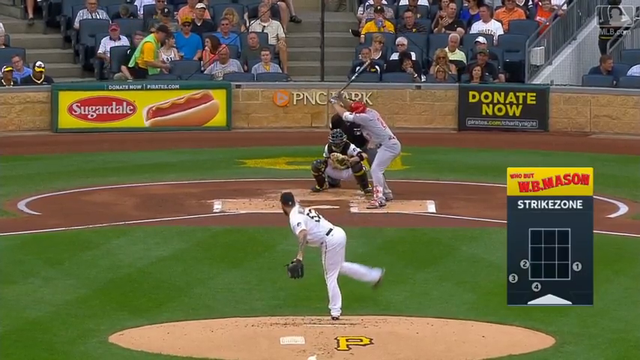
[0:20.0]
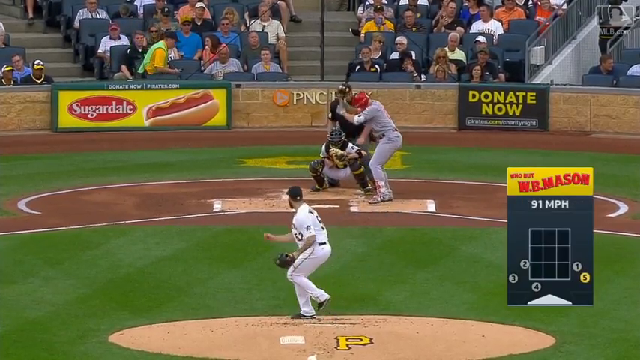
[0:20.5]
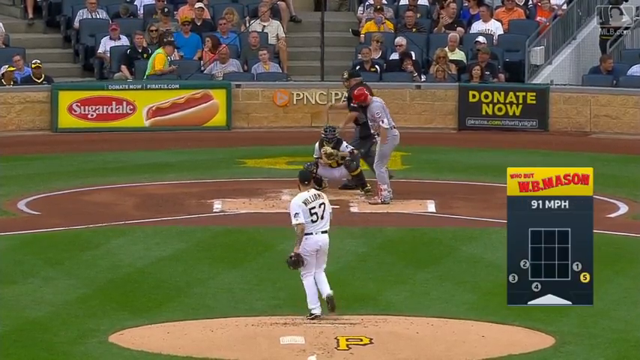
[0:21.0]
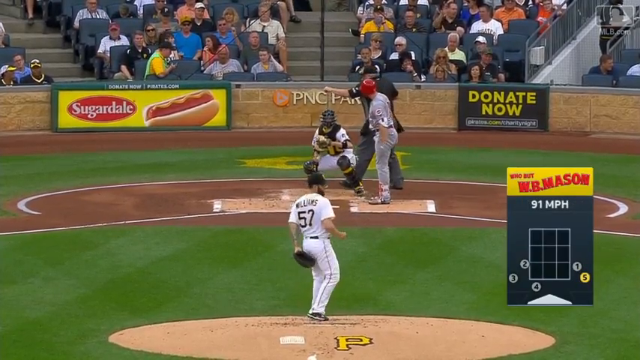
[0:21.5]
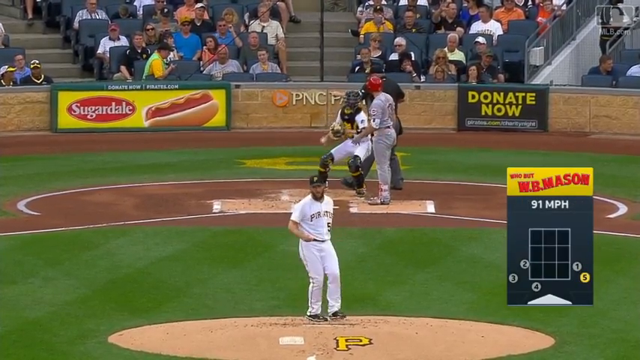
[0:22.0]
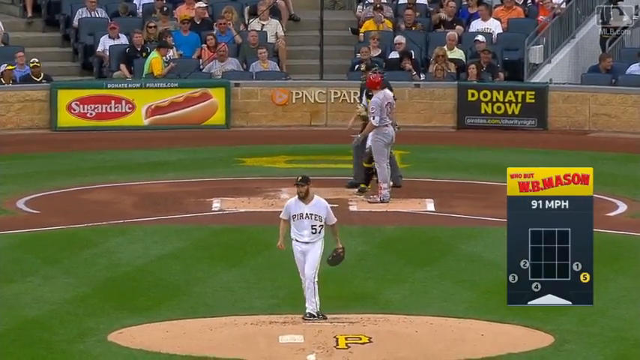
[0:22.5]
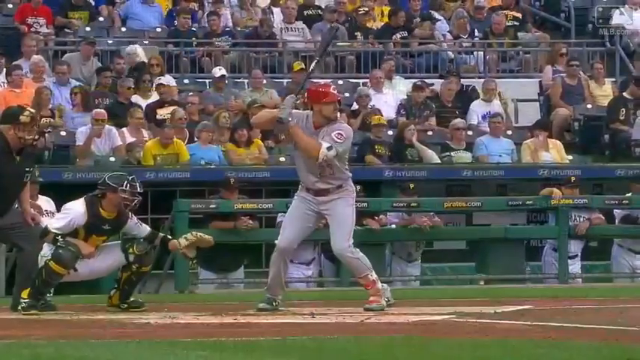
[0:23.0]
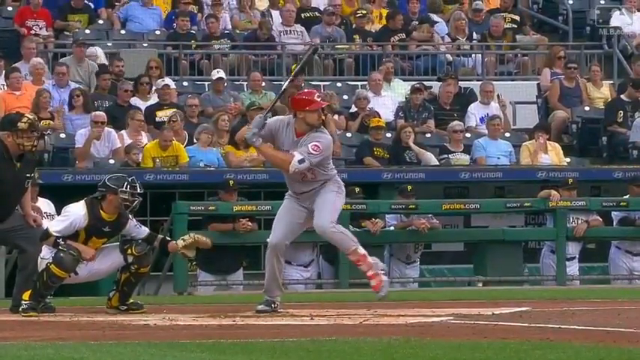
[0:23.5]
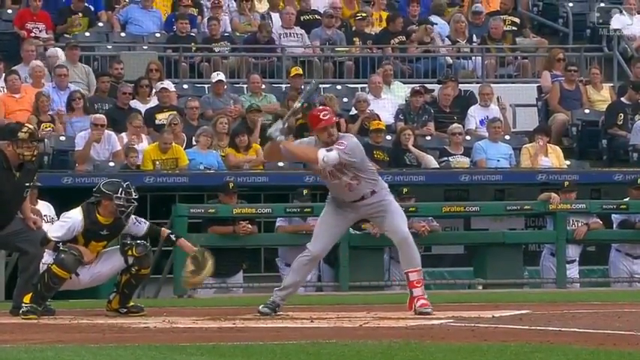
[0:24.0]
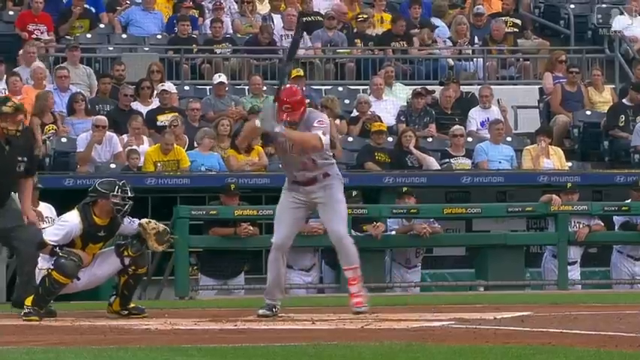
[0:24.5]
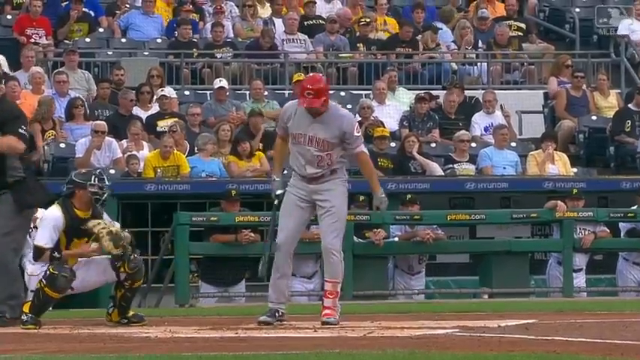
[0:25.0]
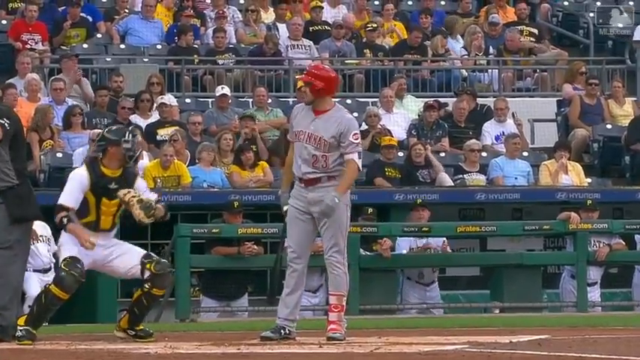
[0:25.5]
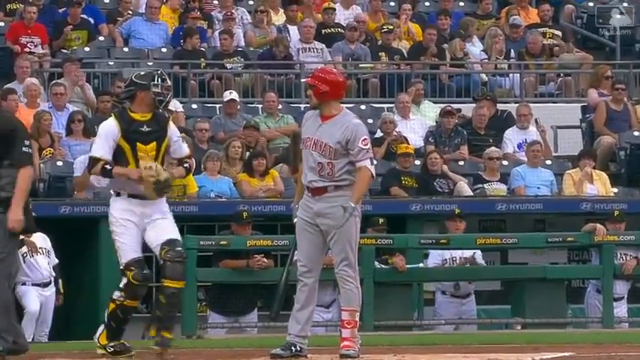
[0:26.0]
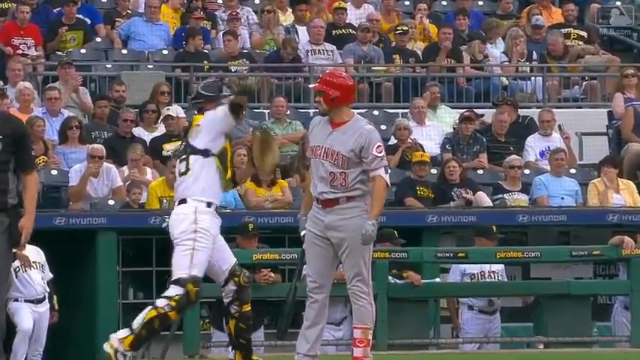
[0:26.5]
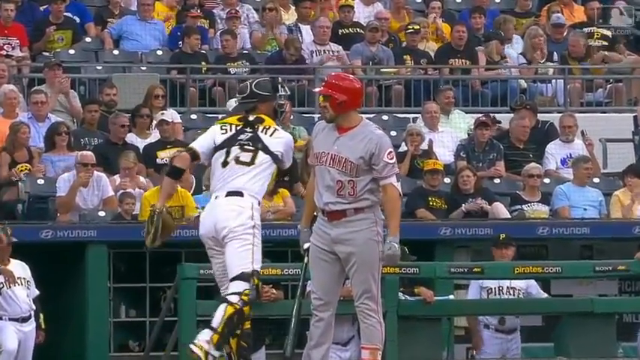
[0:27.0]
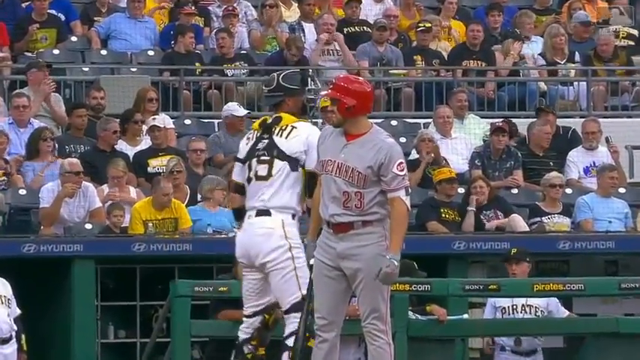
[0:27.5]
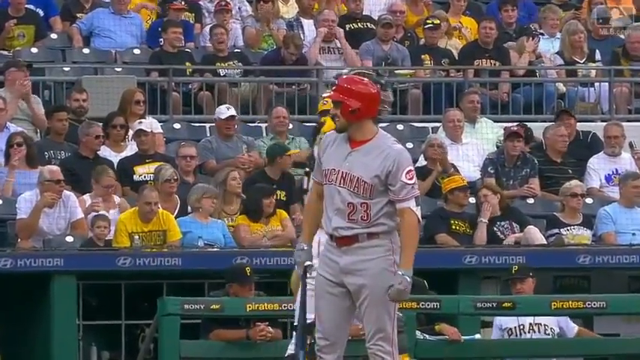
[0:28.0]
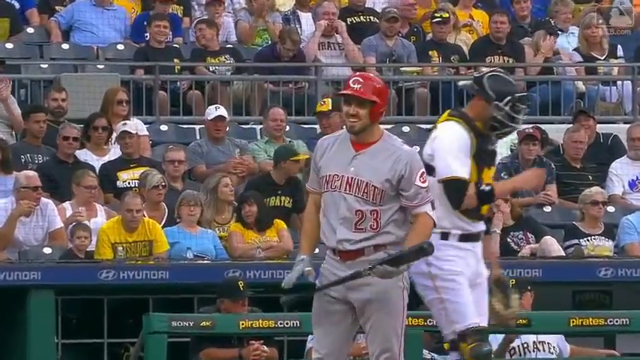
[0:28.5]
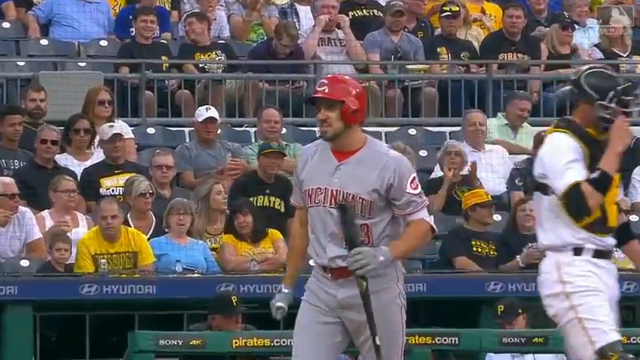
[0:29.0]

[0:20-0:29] A replay shows the pitch and batter number 23 after the ball has passed him. He sort of looks in disbelief and looks at the umpire in disbelief. The broadcast is sponsored by AT&T sportsnet. A strike zone diagram shows that this is the fifth pitch to this batter and that the pitch was 91 miles an hour; it apparently shows that the pitch was not a strike. The batter has something to say to the umpire, and he just smiles in disbelief.